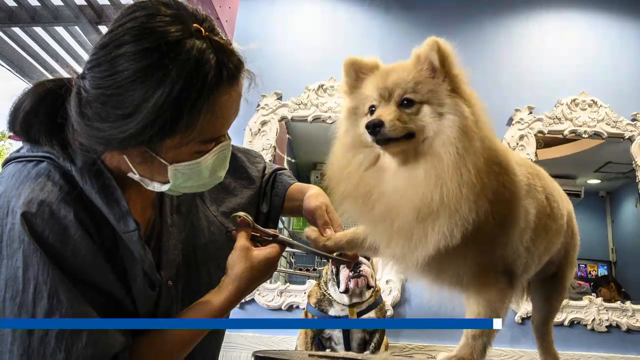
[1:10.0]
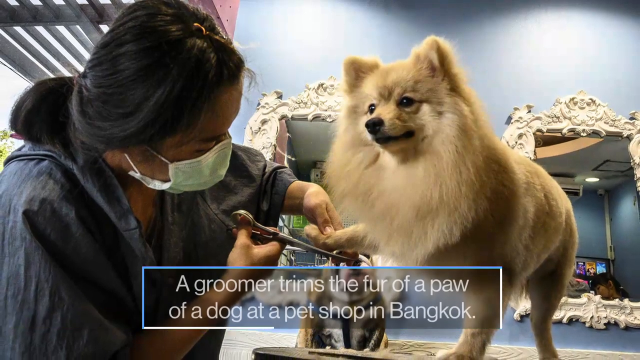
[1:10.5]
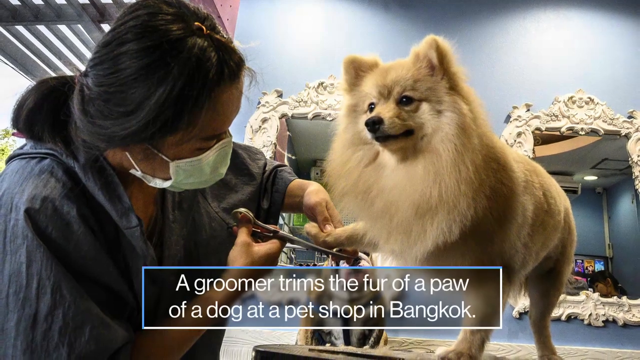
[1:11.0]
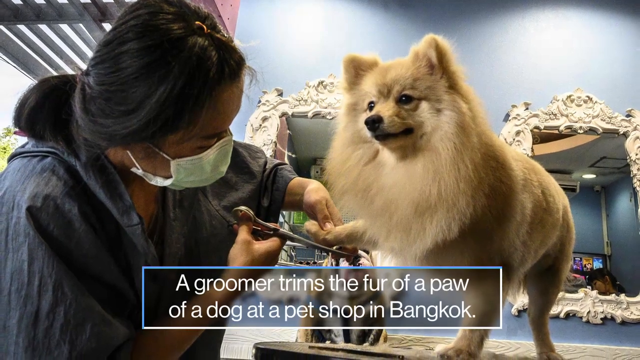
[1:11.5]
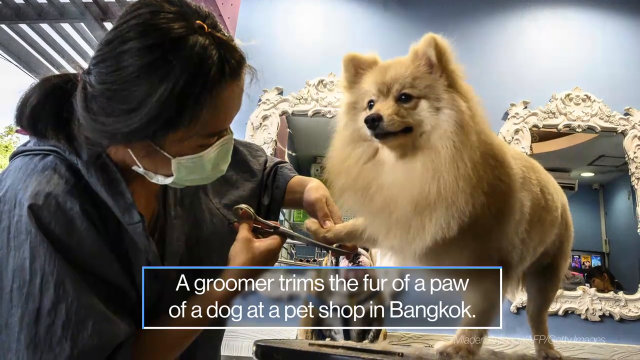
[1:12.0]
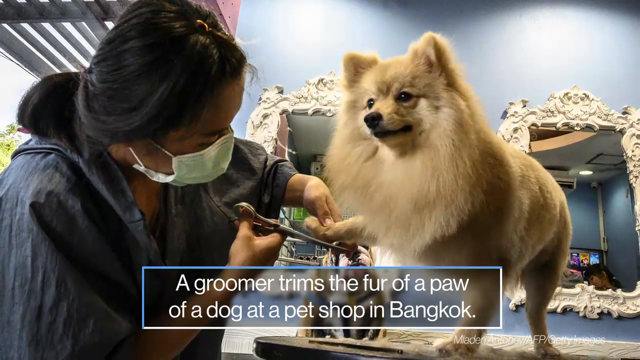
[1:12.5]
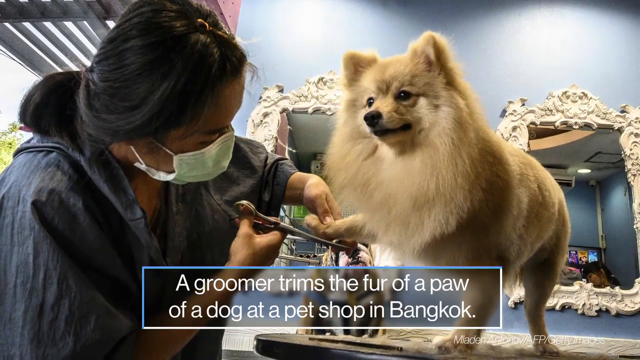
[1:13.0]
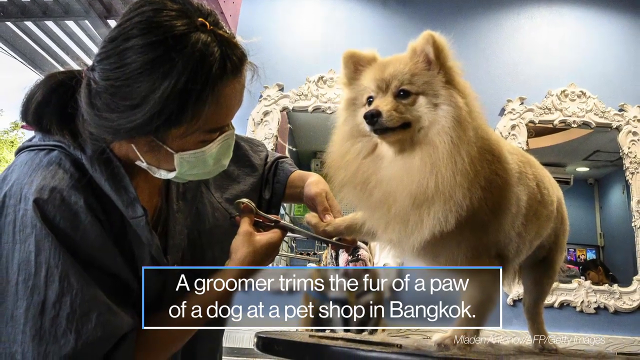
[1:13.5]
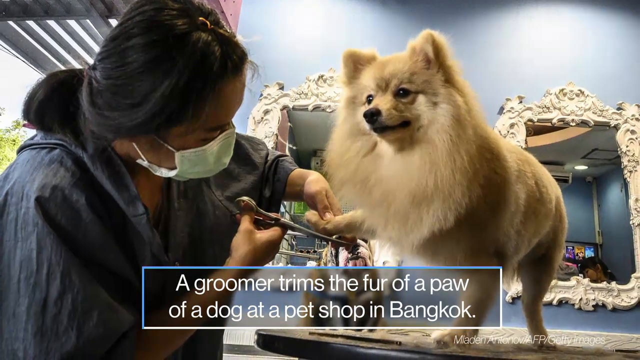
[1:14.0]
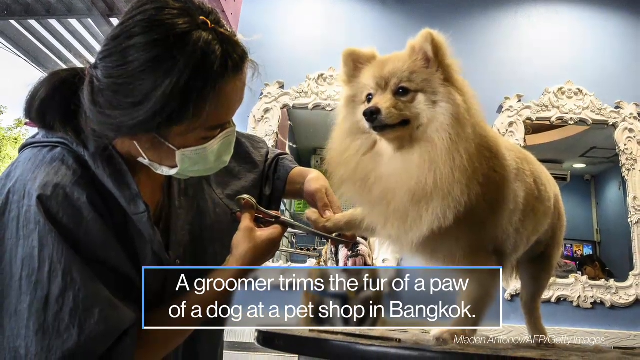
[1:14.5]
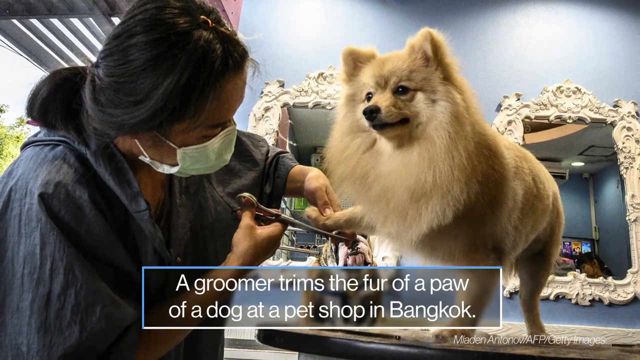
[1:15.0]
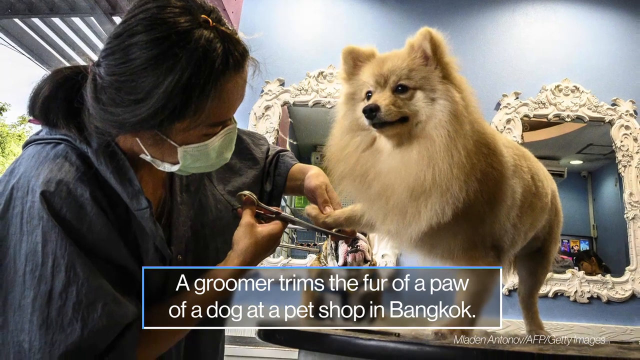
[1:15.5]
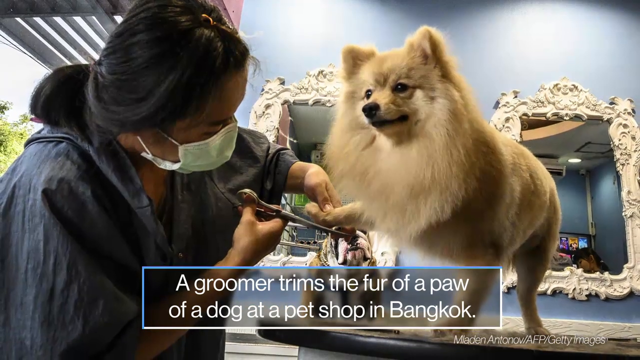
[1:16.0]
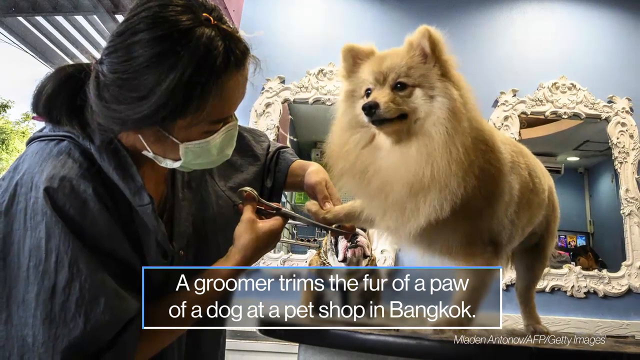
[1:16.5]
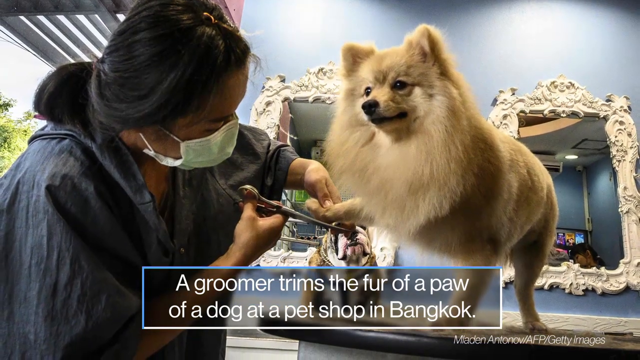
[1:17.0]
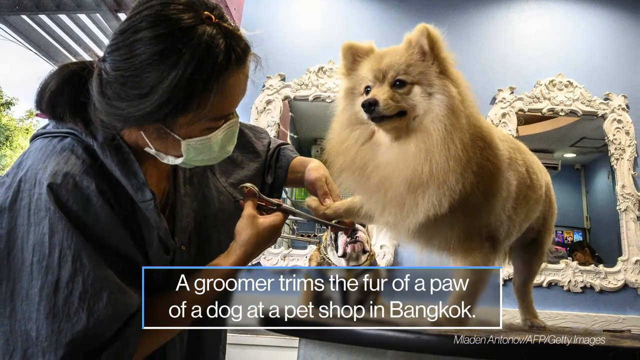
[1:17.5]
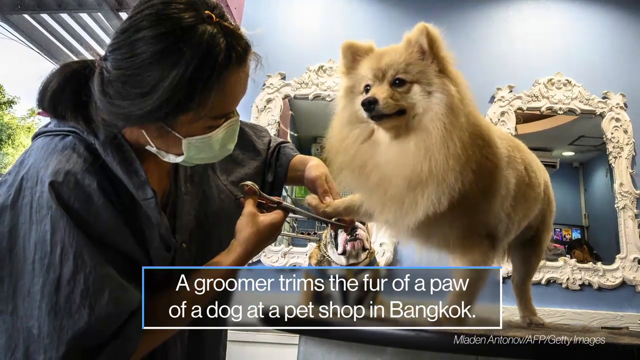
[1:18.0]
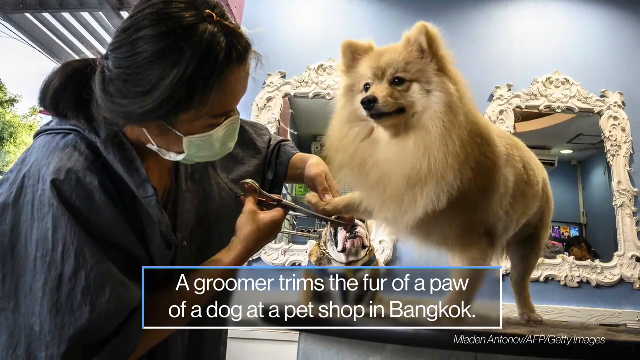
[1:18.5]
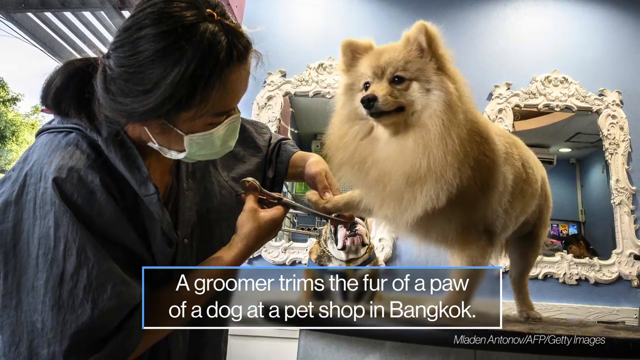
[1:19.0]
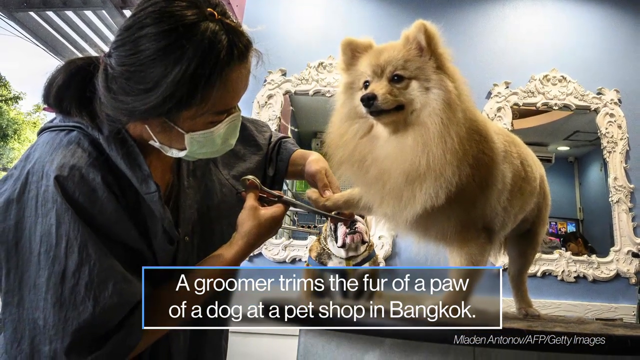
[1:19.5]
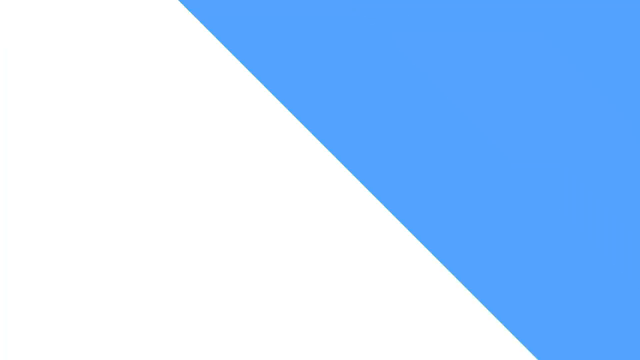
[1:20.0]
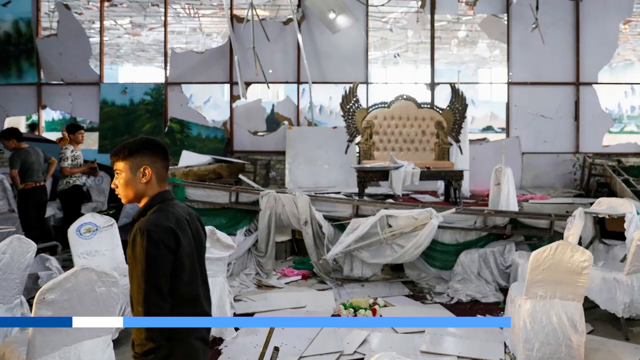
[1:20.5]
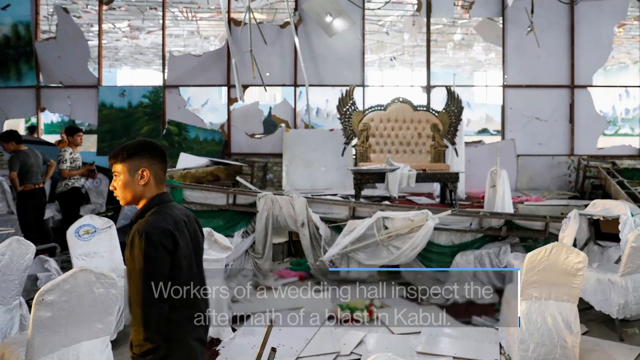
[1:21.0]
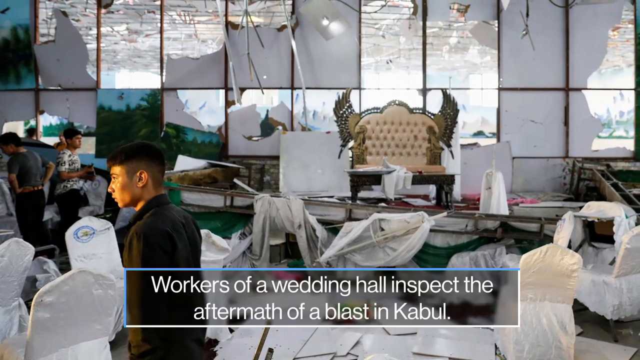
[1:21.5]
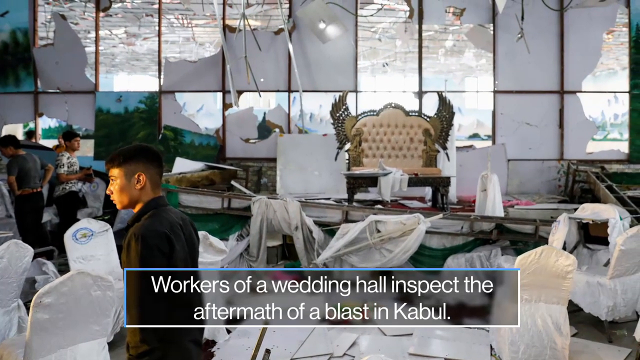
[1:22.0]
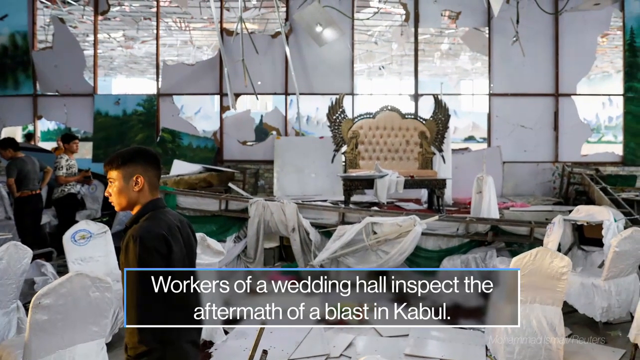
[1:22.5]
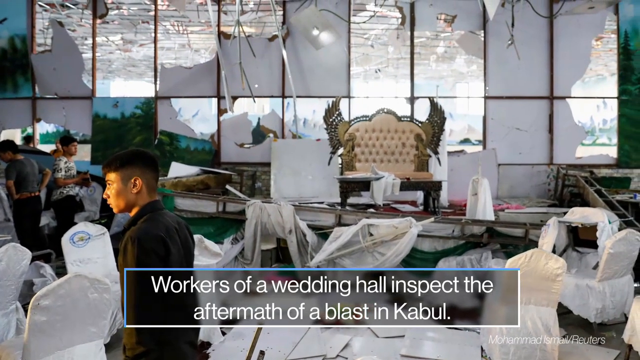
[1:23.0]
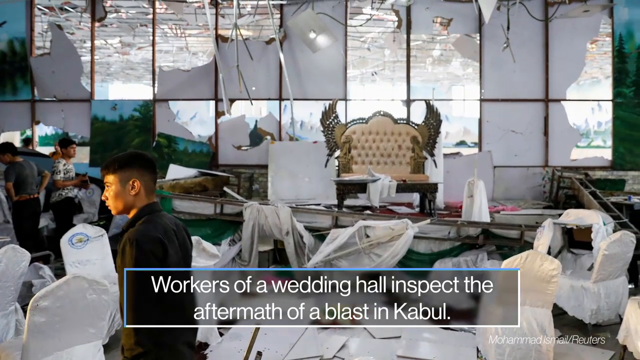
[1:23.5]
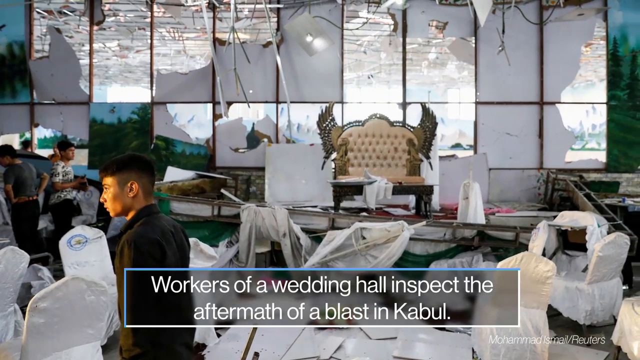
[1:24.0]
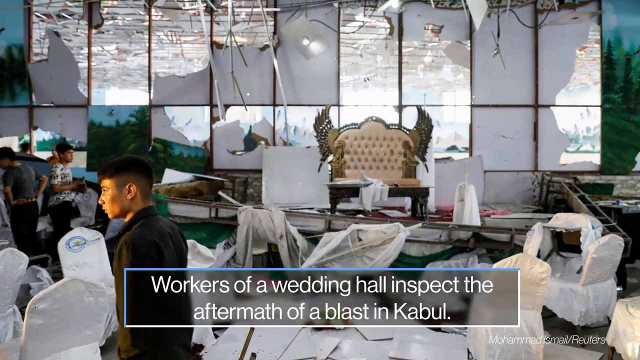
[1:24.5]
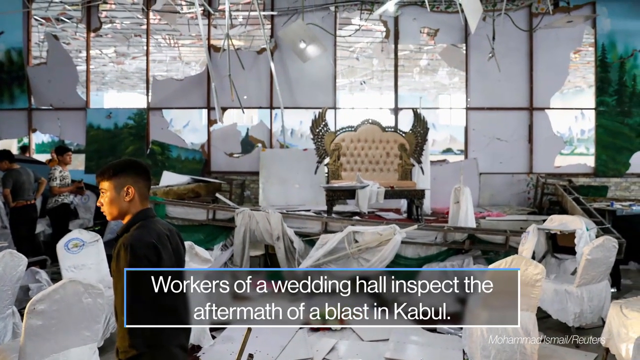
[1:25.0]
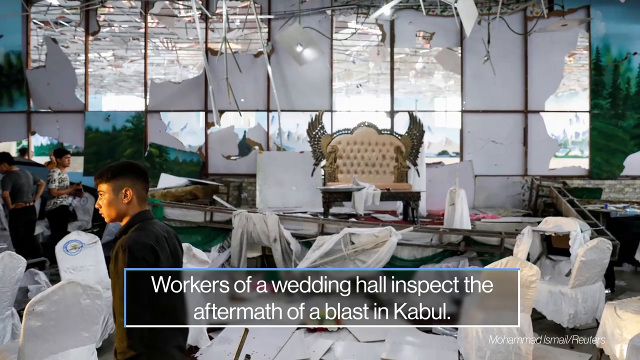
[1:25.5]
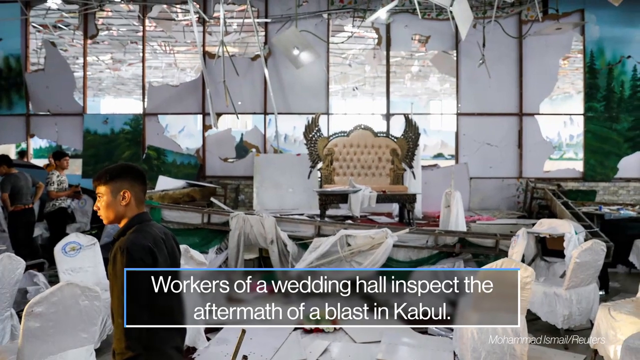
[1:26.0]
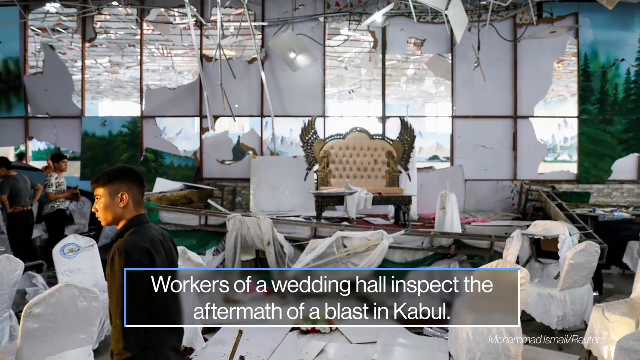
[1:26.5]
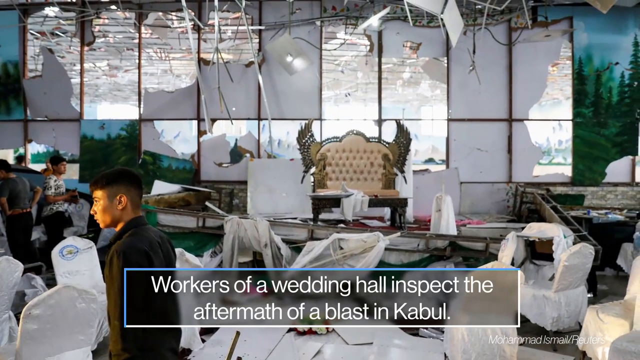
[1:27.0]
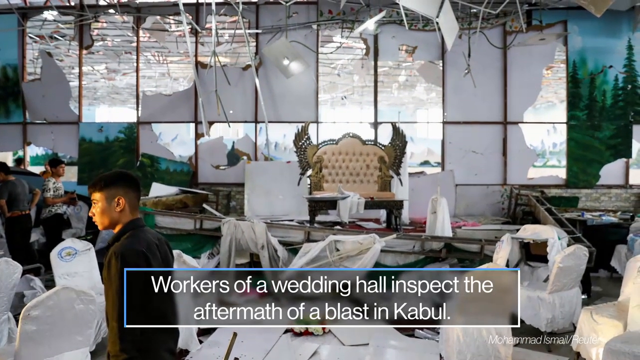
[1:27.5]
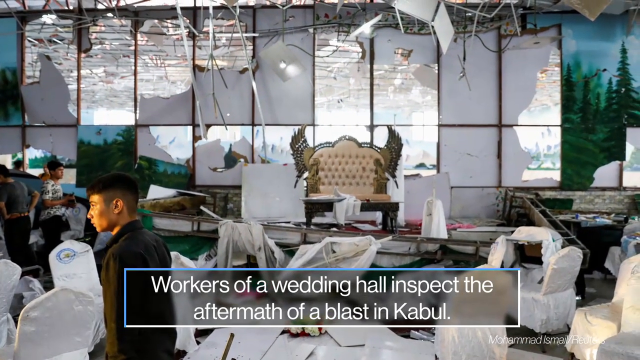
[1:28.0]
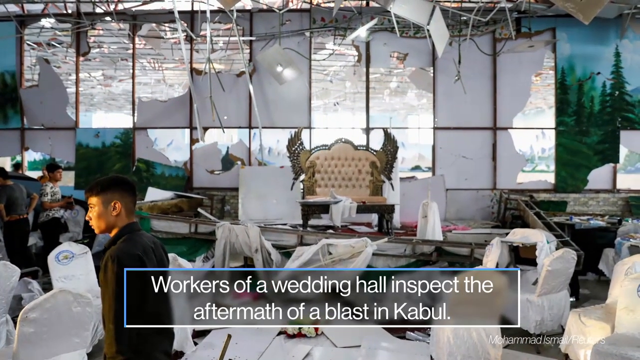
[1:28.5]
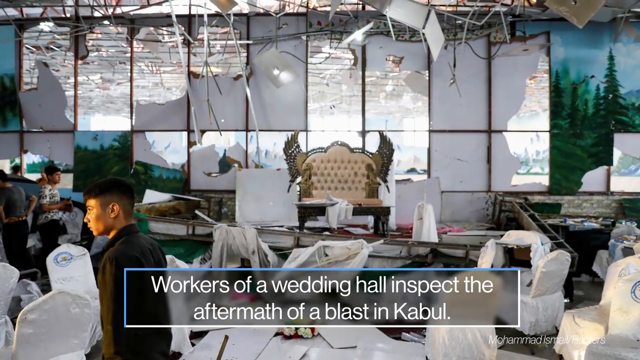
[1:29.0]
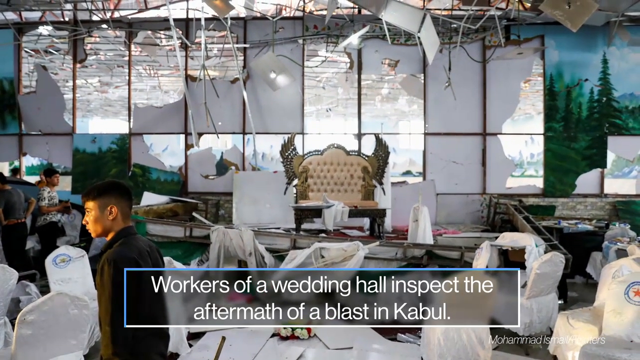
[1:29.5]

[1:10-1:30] The next image shows a dog and a groomer. The groomer picks up one of the dog's paws to clip it with a nail scissor. The dog looks freshly washed and brushed and is very fluffy; it is tan and looks like it could possibly be a corgi or a similar dog. The woman grooming the dog wears a mask, and the caption indicates she is trimming the fur of a dog's paw in a pet shop in Bangkok. The next image shows a large building with snow piled up outside. The building is in disarray, and the caption indicates that workers are inspecting a wedding hall after a blast in Kabul. The windows are partially blown out, the ceiling tiles have fallen down, and wires and debris hang from the ceiling.